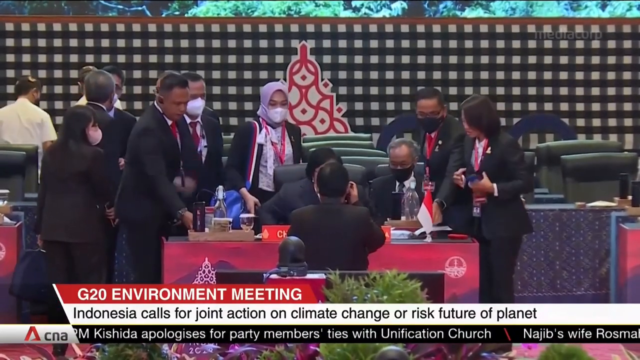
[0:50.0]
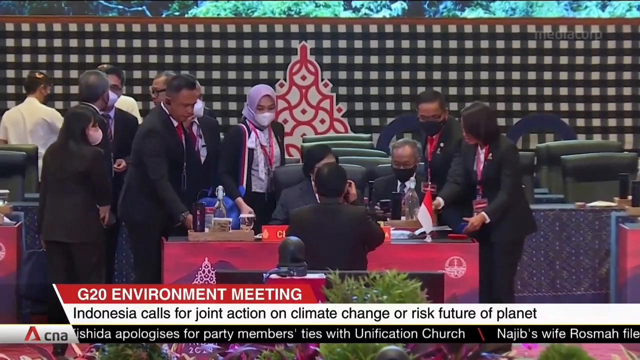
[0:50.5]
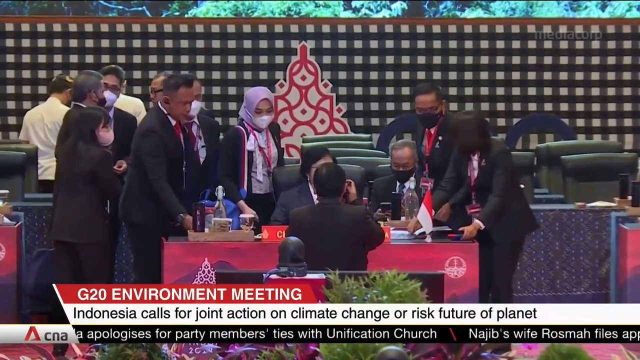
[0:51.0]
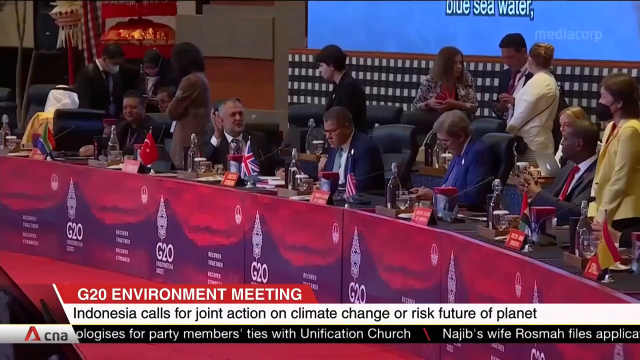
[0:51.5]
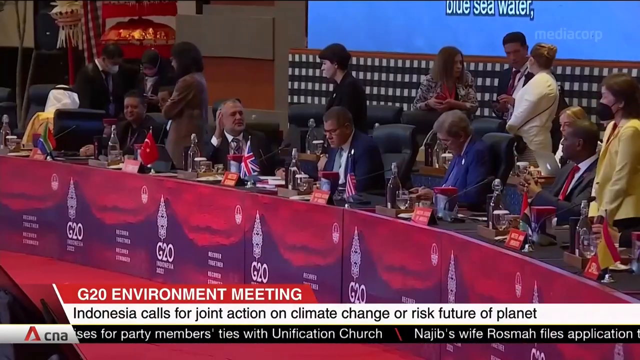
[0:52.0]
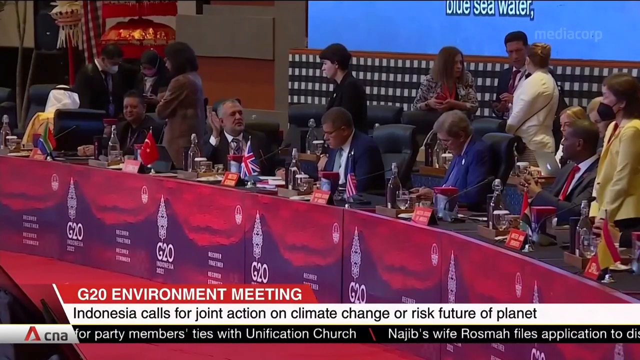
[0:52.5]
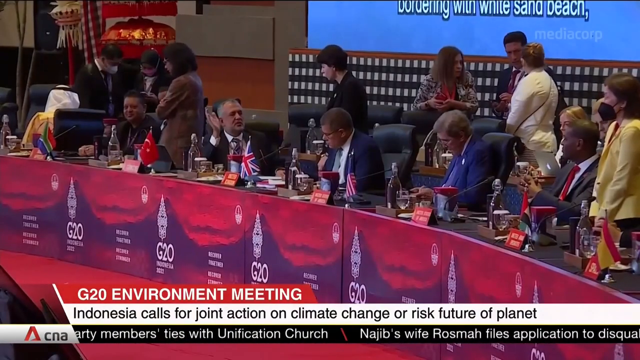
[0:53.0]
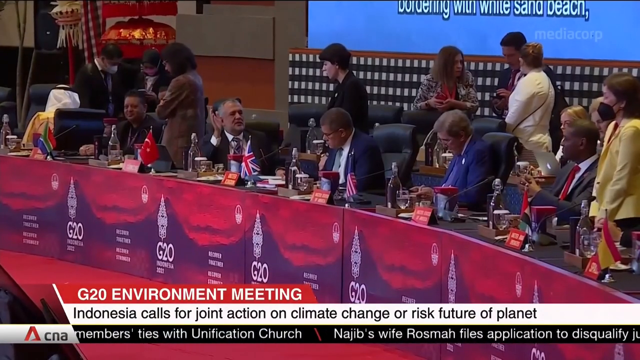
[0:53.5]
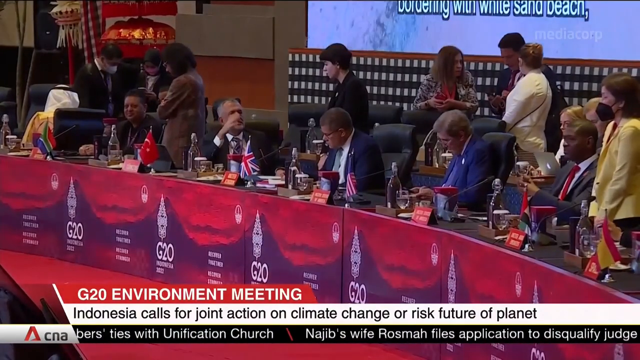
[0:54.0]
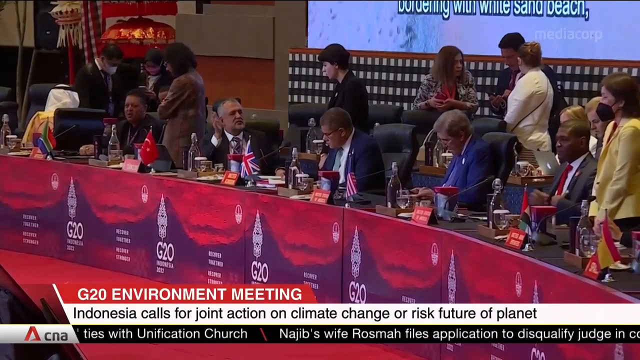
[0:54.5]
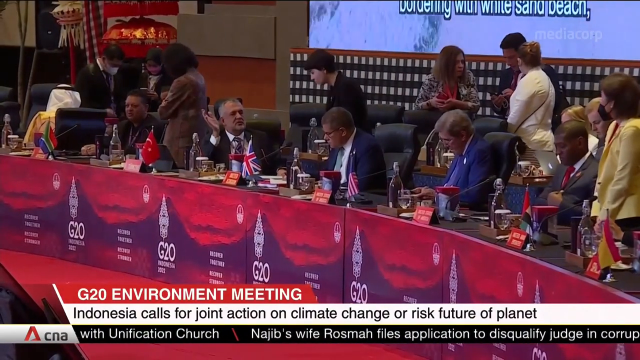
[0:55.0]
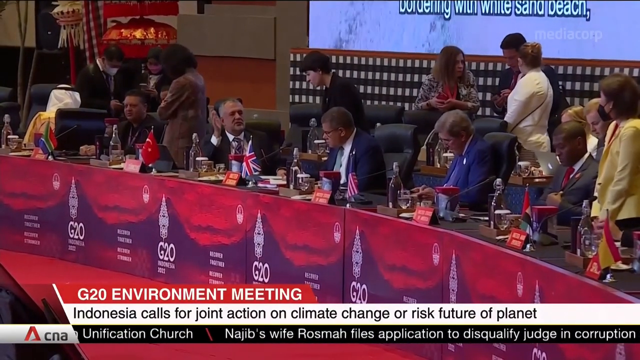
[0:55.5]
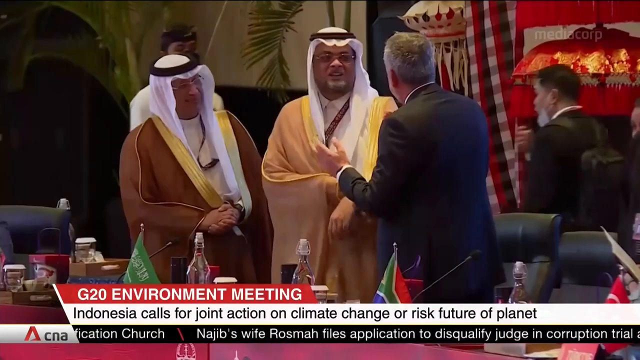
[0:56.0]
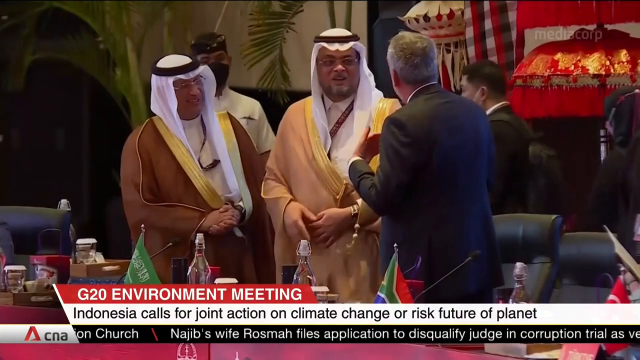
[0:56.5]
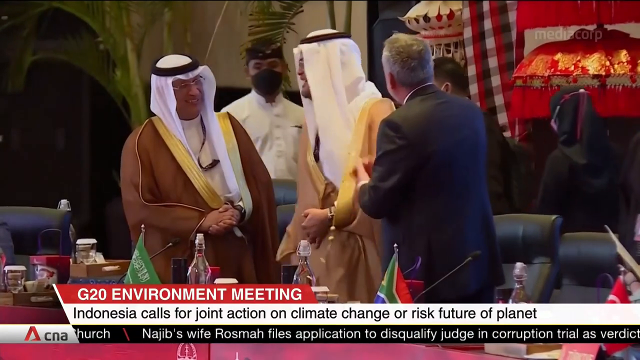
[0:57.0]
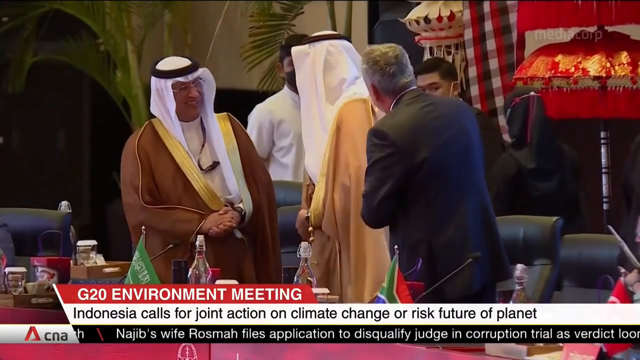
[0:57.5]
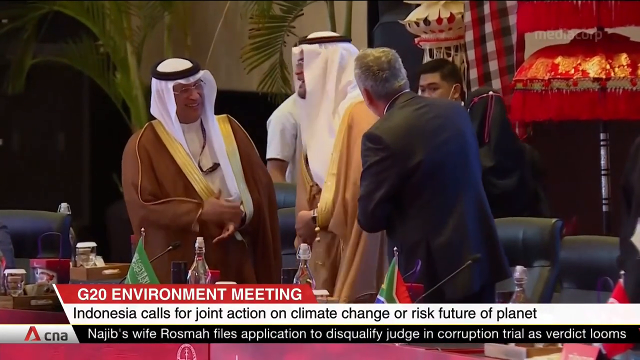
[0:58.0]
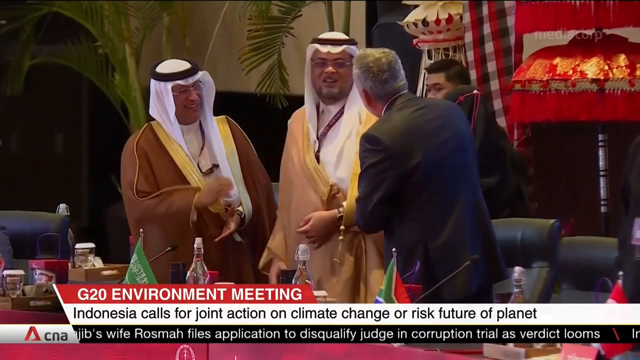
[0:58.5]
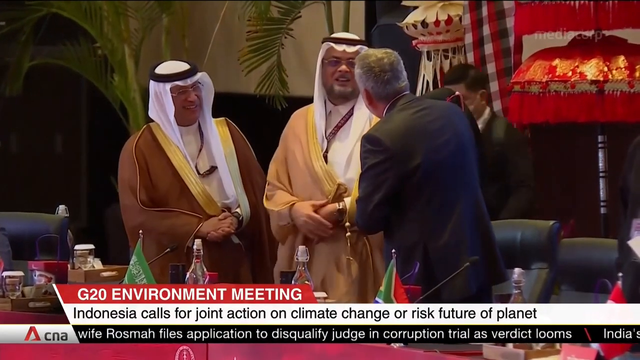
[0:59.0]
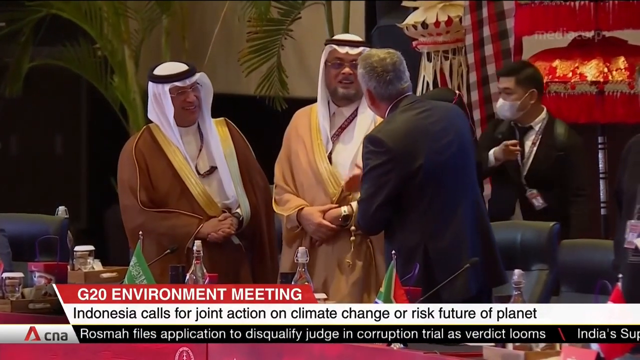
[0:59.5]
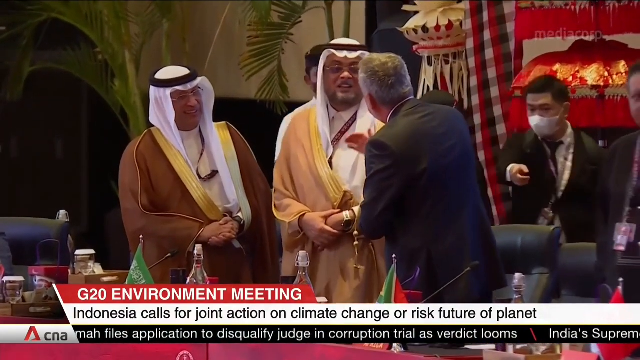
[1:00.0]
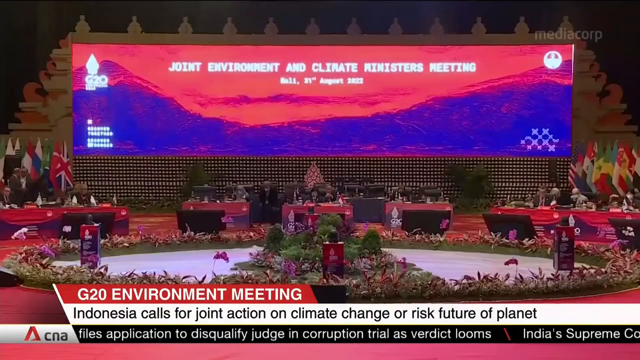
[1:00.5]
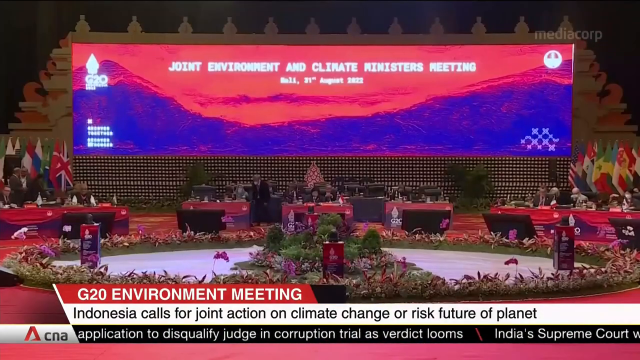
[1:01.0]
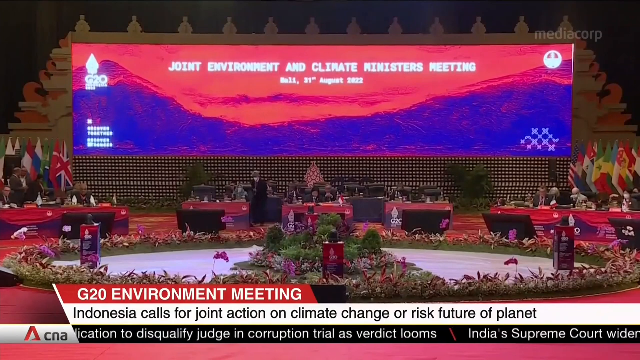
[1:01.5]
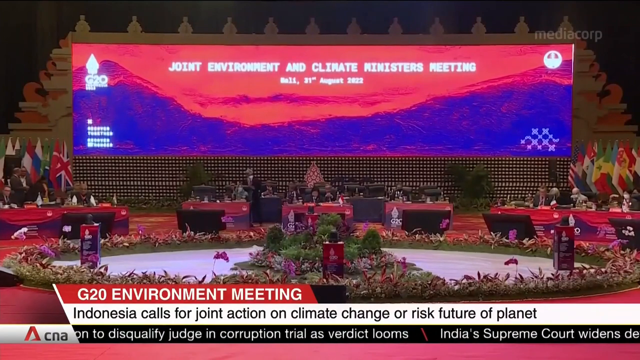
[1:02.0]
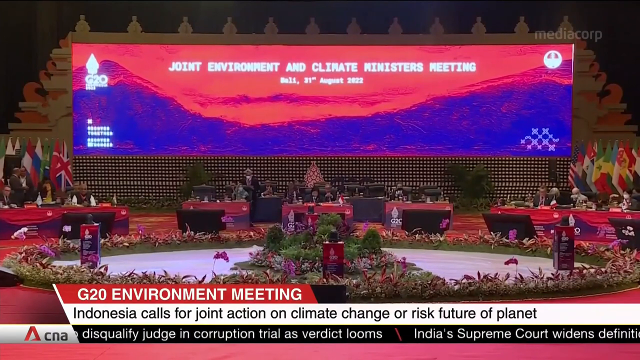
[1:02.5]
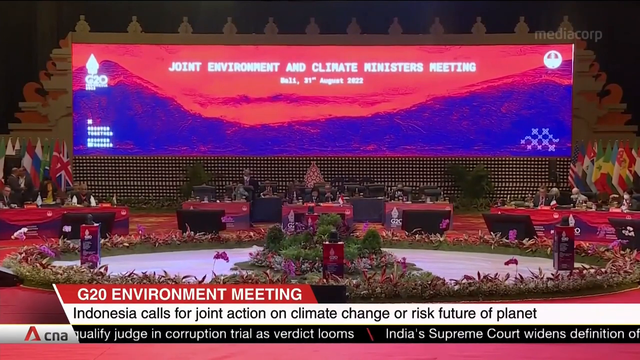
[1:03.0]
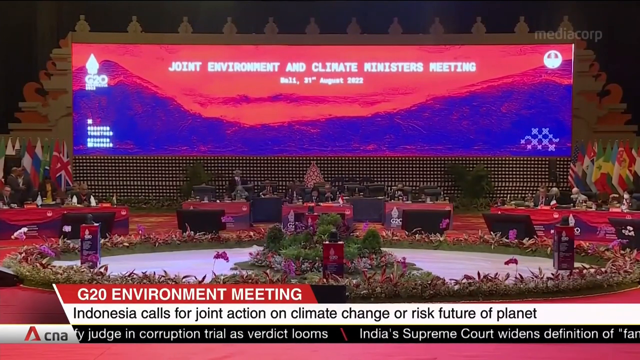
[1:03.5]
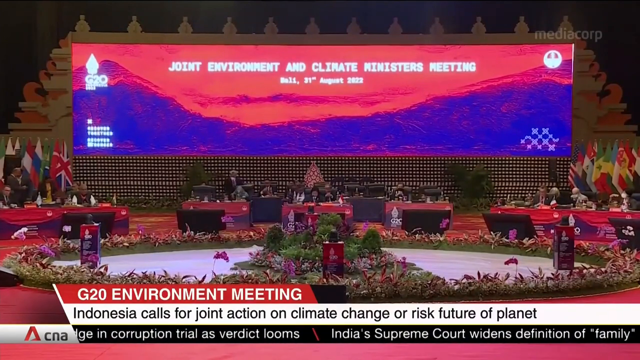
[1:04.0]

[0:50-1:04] From a different angle, multiple representatives are shown; some look at their phones or flip through the pages of something, while others talk to each other. A United Kingdom representative speaks with an American representative. In the background, what appears to be a Saudi Arabian representative is turned around, speaking to somebody behind him. The video cuts to other representatives who are out of their seats speaking to each other, some smiling, as if talking about nothing important. The video ends on the main pavilion view once again, with the giant screen on the wall now showing "Joint Environment and Climate Ministers Meeting, Bali, 31st of August 2022," presumably as the meeting is about to begin.